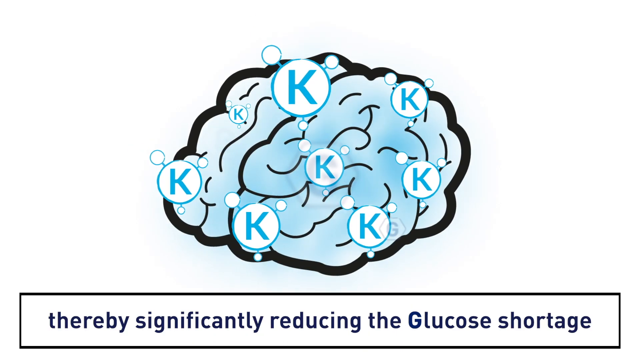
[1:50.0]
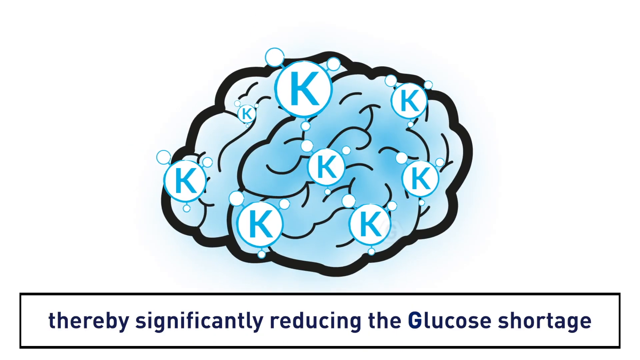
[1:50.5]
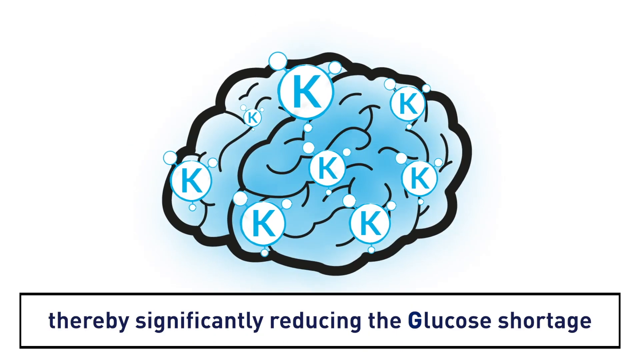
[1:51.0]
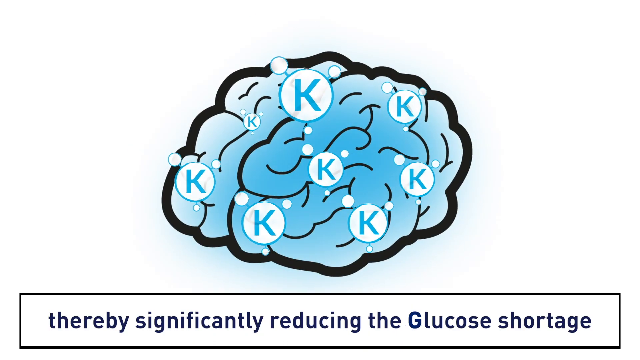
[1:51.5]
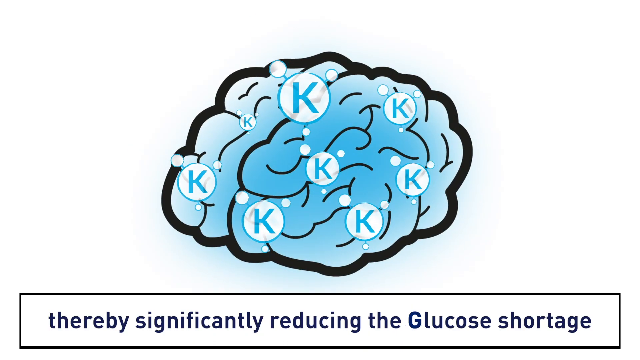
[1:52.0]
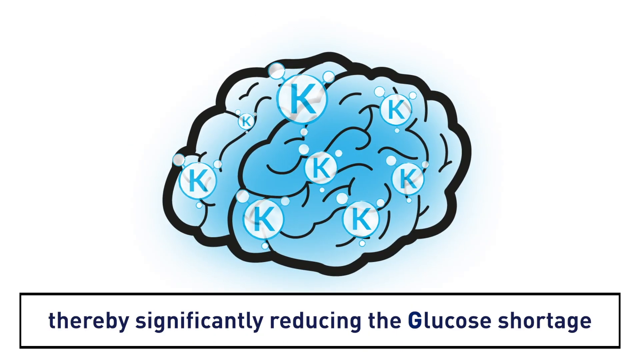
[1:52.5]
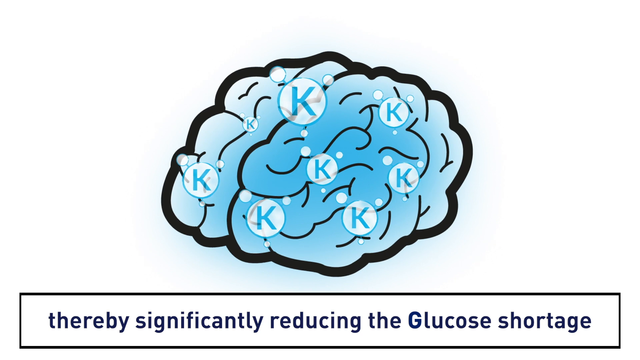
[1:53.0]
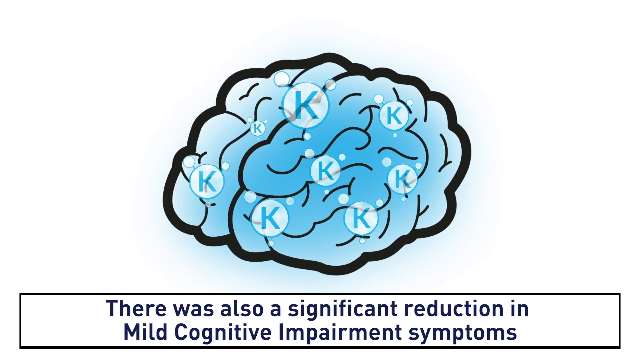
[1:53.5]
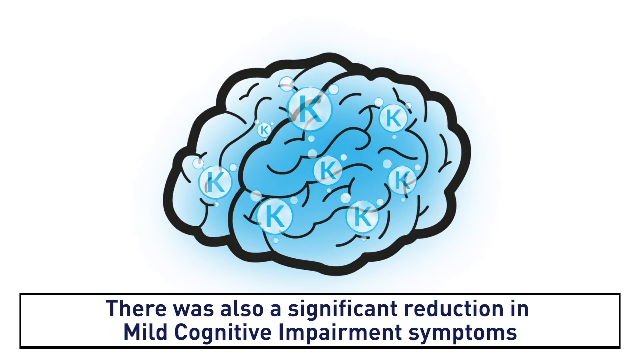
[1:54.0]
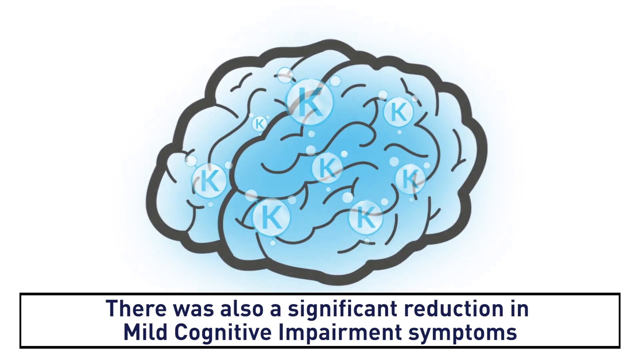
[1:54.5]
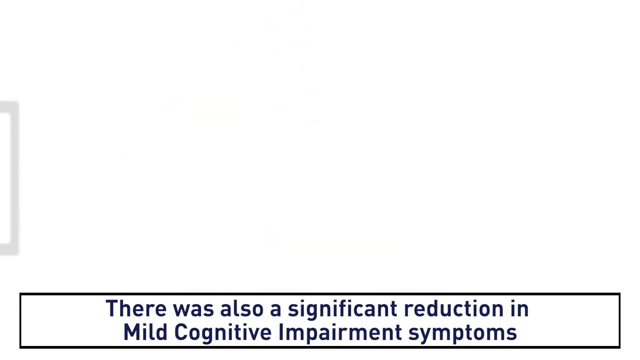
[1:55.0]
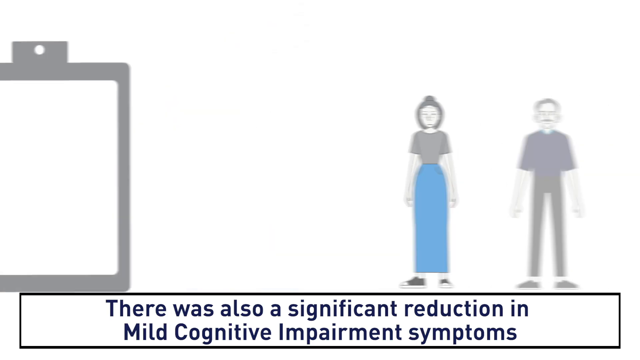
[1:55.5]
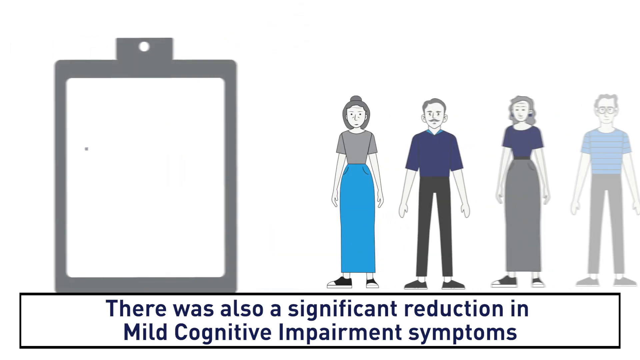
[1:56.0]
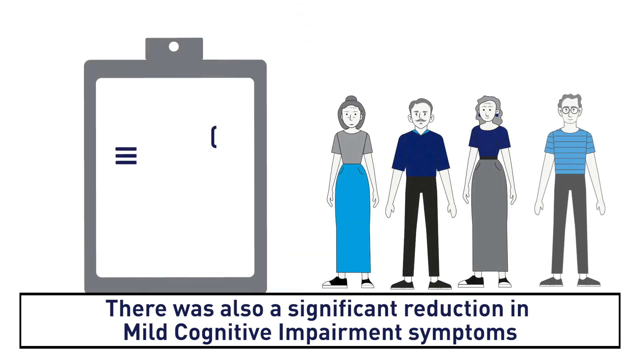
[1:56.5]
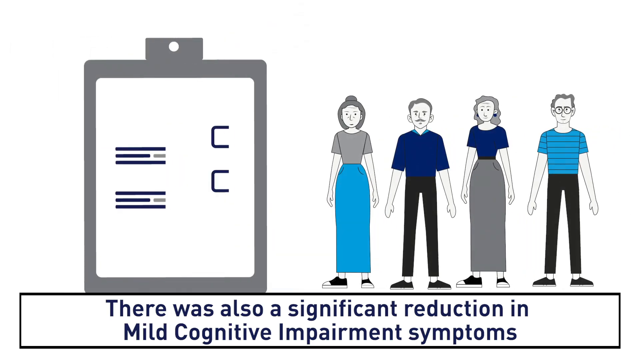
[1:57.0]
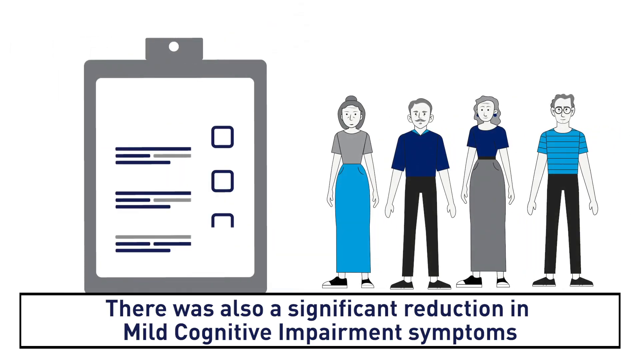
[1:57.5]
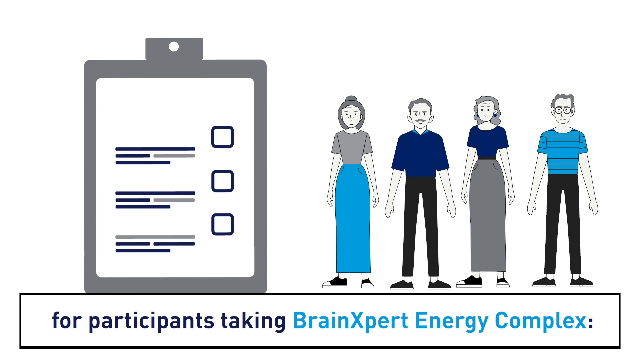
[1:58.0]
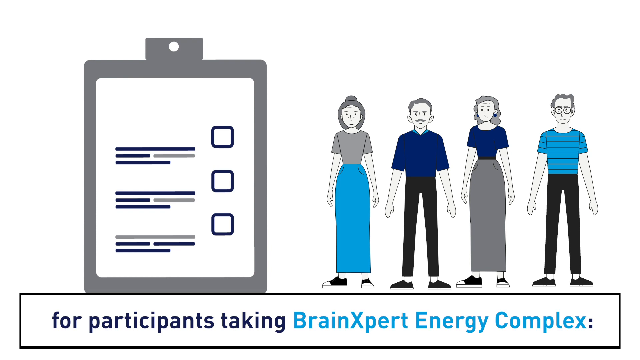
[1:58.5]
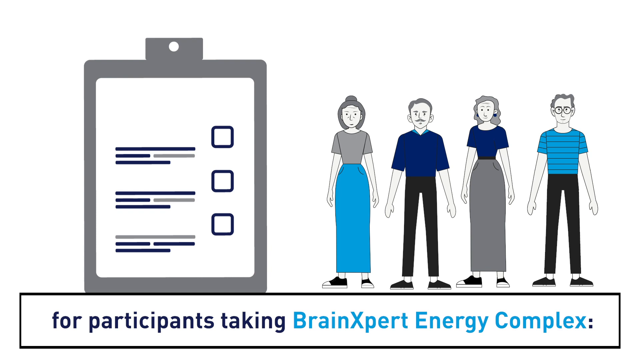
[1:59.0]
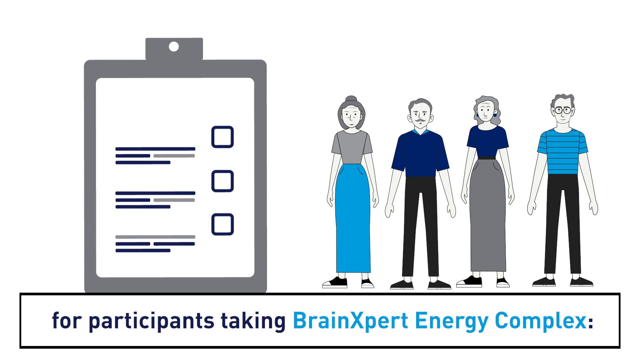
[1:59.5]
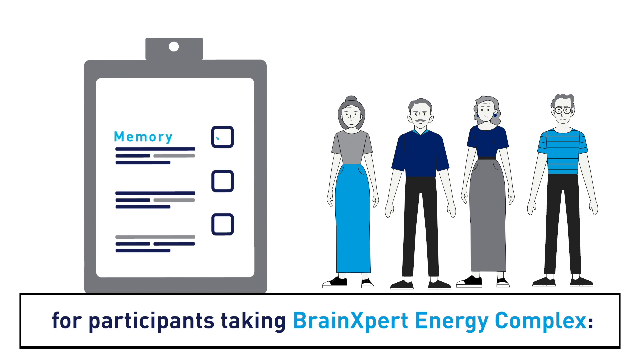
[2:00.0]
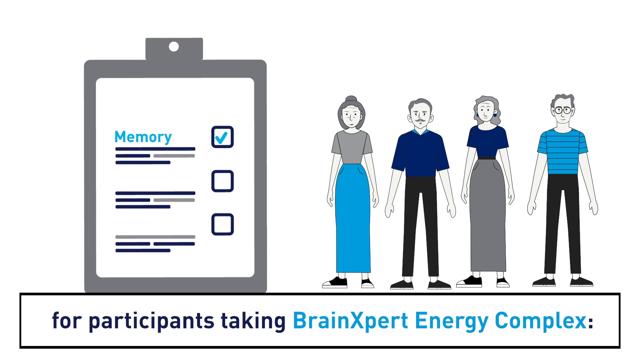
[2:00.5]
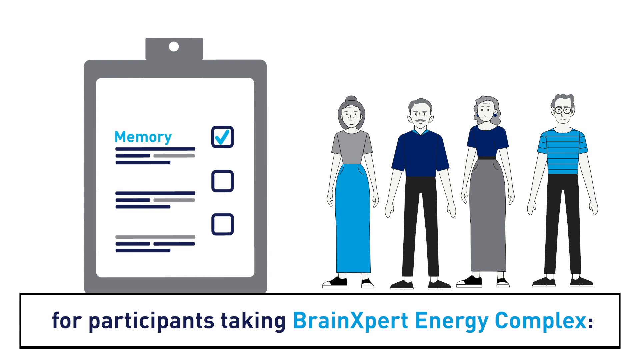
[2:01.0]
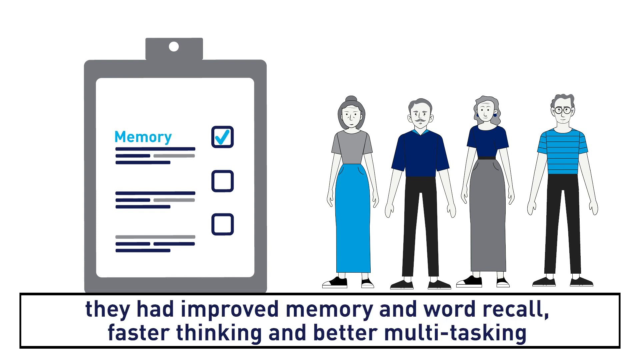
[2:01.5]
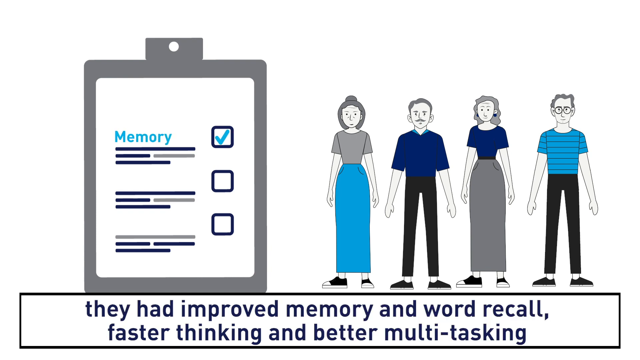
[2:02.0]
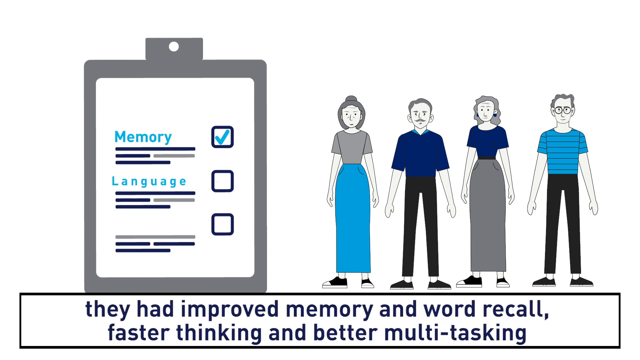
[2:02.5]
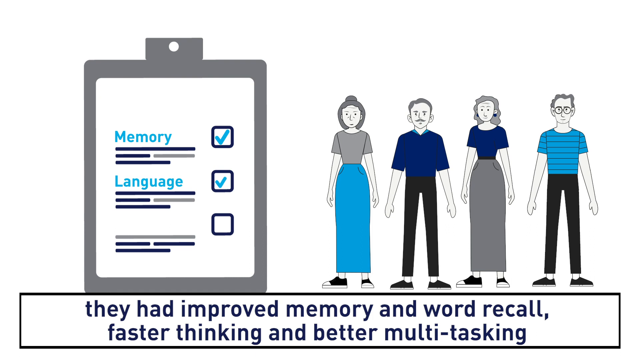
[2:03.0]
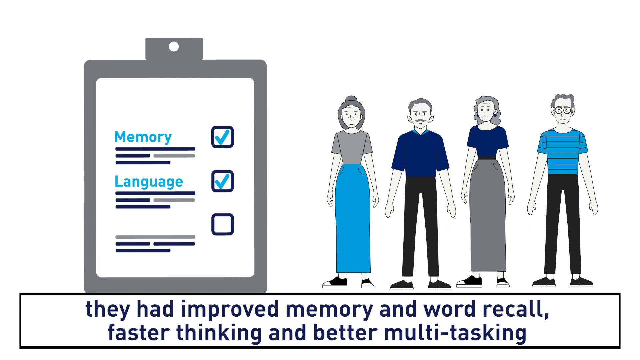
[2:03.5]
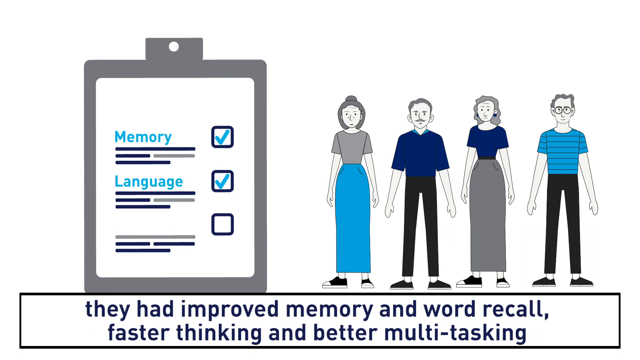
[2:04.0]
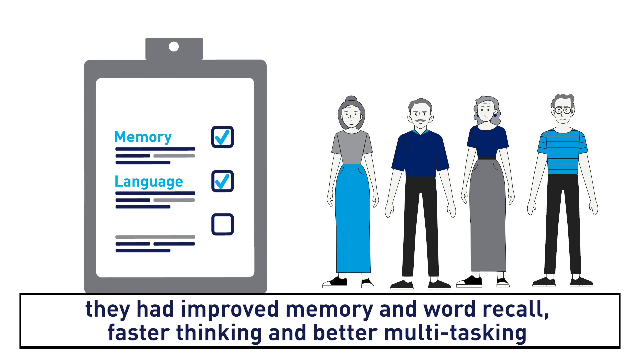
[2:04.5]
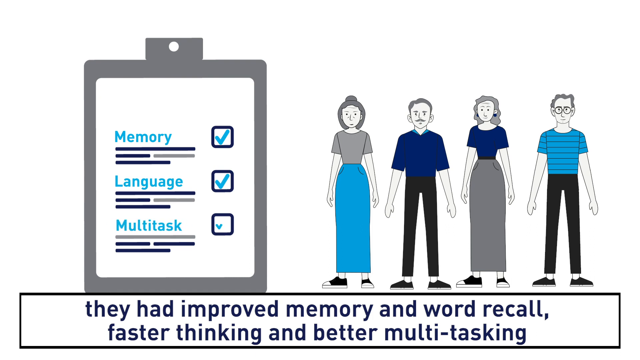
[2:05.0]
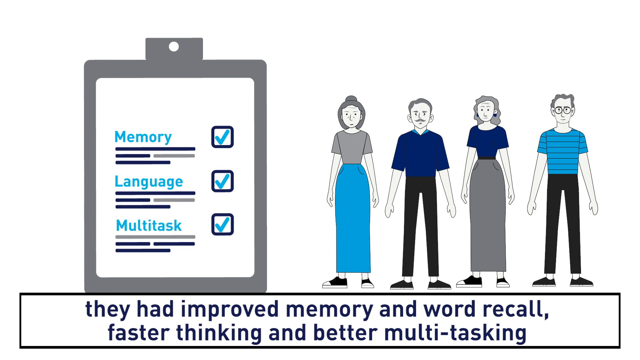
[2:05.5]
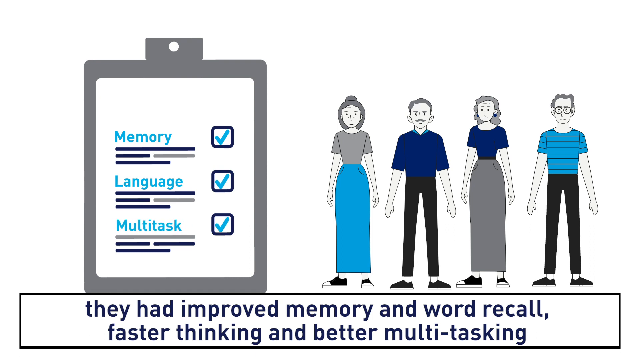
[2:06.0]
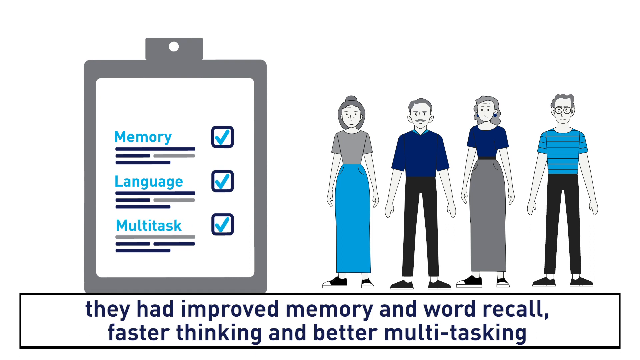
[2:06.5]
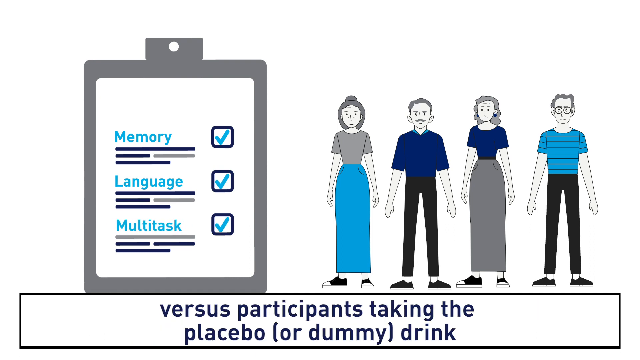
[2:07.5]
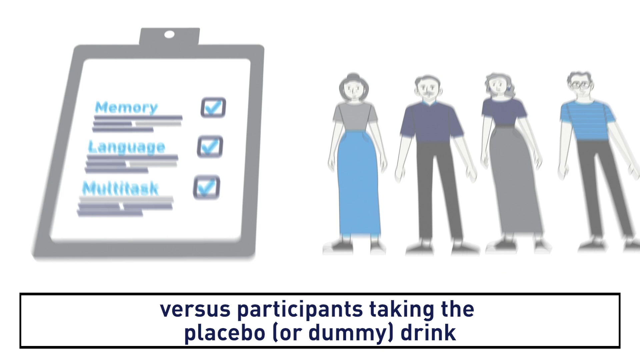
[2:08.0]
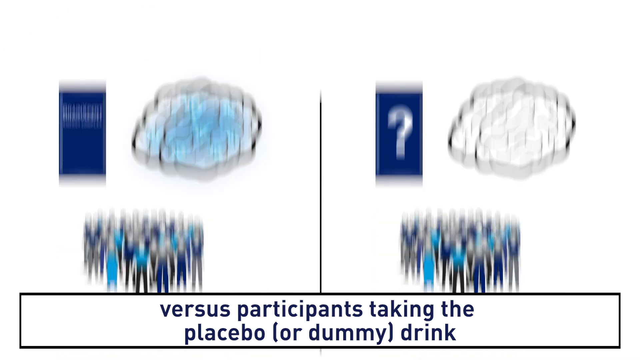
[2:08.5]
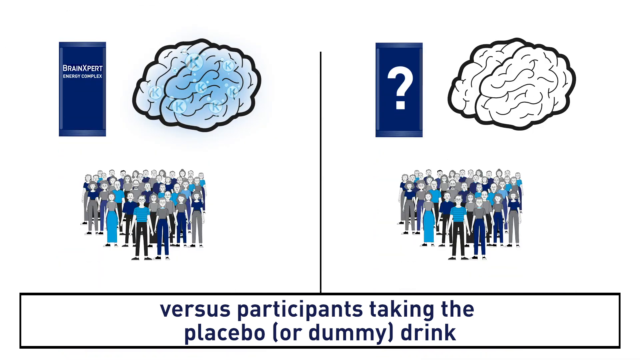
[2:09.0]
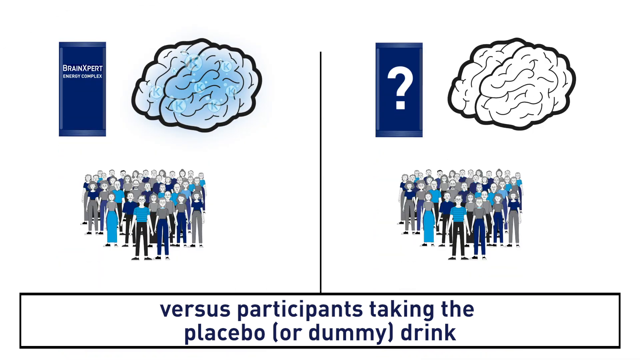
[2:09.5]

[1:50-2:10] A brain contains a number of circles with the letter K inside, seven or eight of them in different sizes. The bottom text says "thereby significantly reducing the glucose shortage", and the brain kind of wiggles in and out. The next screen says "there was also a significant reduction in mild cognitive impairment symptoms". A clipboard with a checklist appears on the left, and on the right are four people, two females and two males, ordered from left to right female, male, female, male, each in a combination of gray, blue or black clothing. The male on the far right has glasses and no one else does; the third person, a female, wears earrings. The bottom text says "are participants taking brain expert energy complex?" The clipboard shows memory checked, text mentions improved memory, faster thinking and better multitasking, and then language and multitask are checked. The screen changes, and the bottom text says "versus participants taking the placebo or dummy drink". A split screen follows, with people at the bottom and a brain on each side: on the left the brain is colored blue with a letter K, while on the right there is just the brain with no letter Ks inside it. The left side shows "brain expert" and "energy complex" on a rectangle, and the right side shows a question mark.